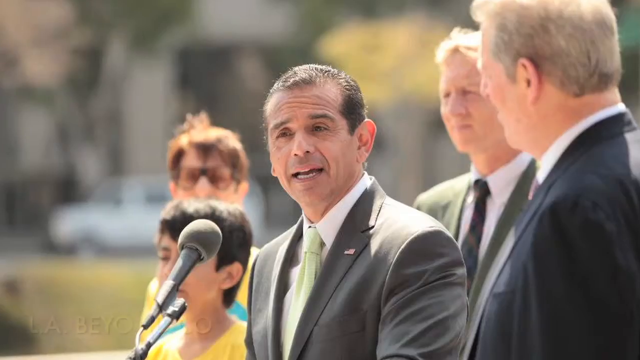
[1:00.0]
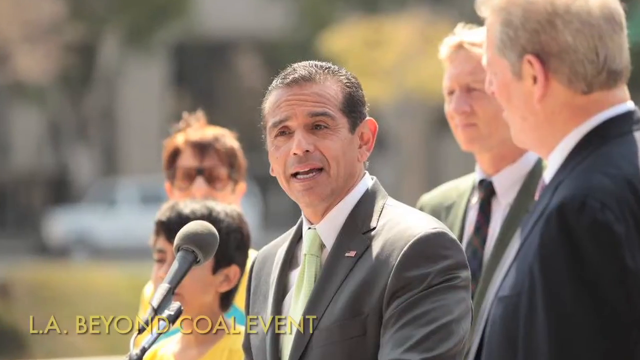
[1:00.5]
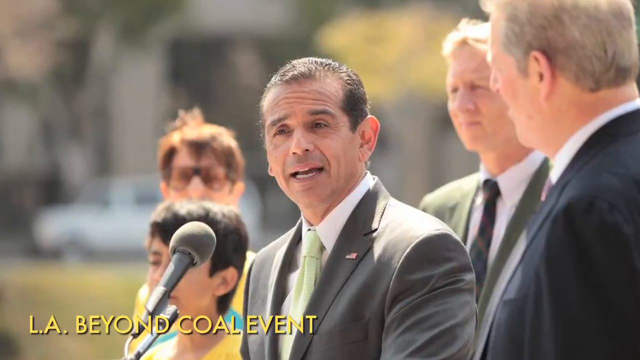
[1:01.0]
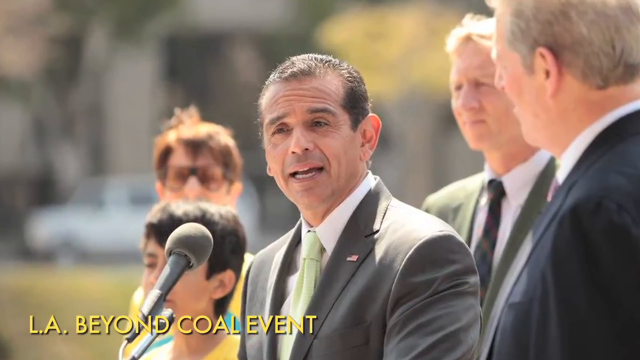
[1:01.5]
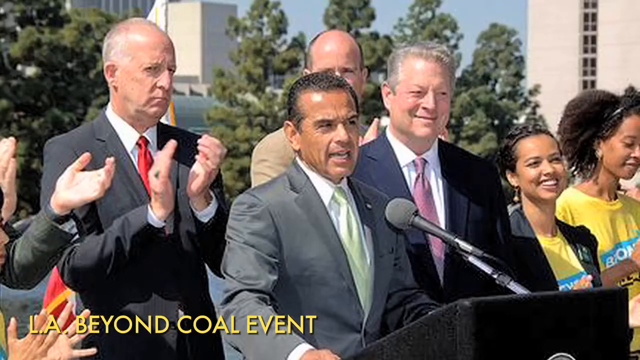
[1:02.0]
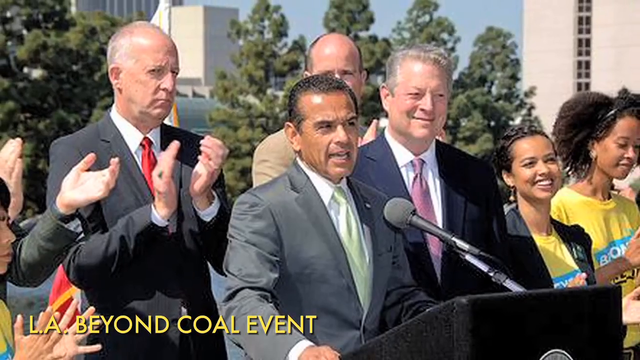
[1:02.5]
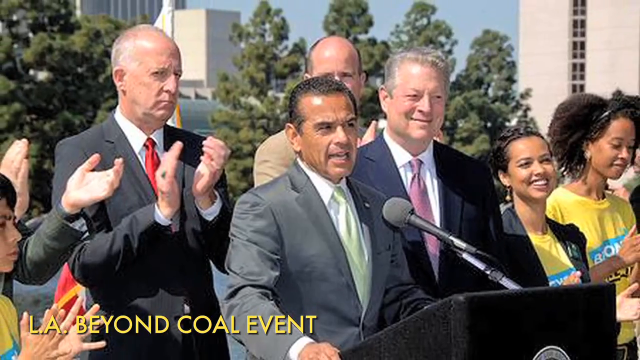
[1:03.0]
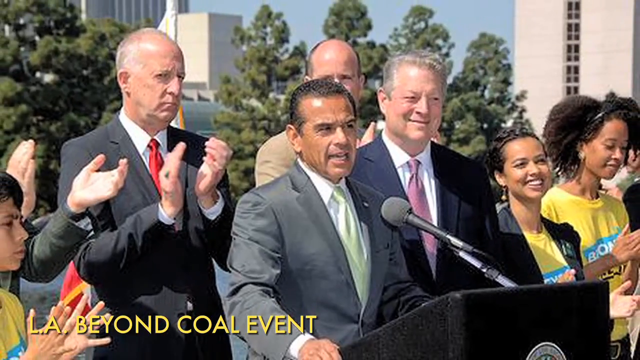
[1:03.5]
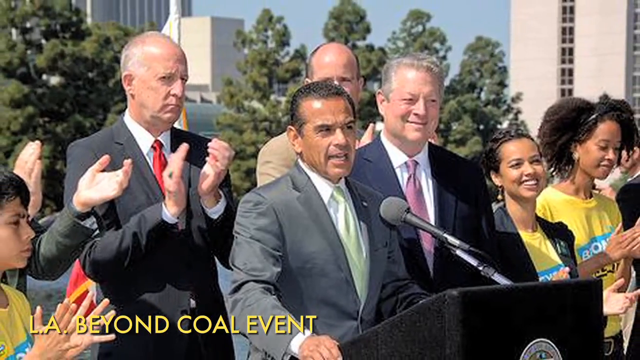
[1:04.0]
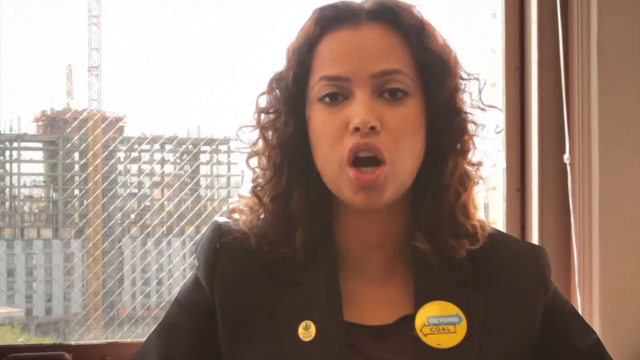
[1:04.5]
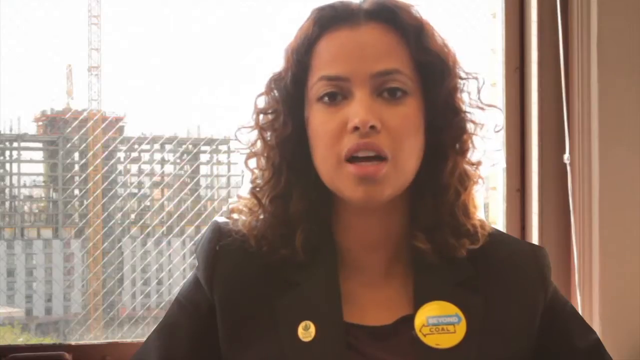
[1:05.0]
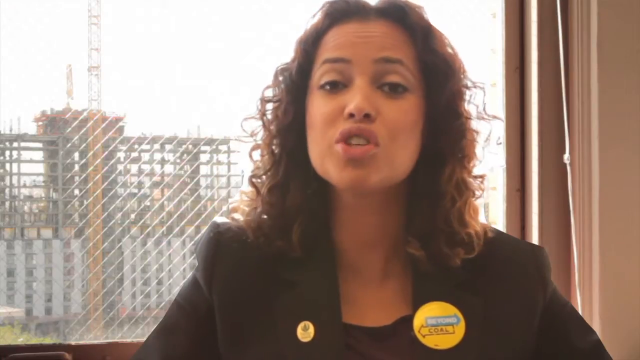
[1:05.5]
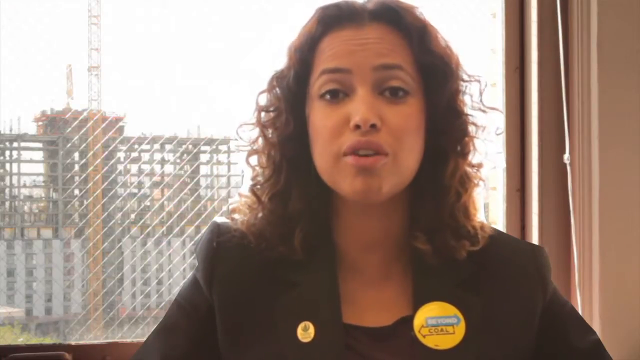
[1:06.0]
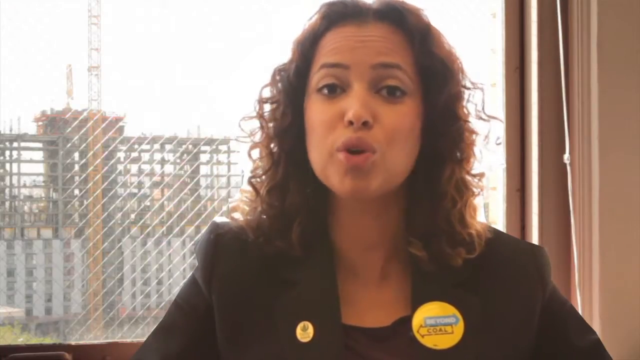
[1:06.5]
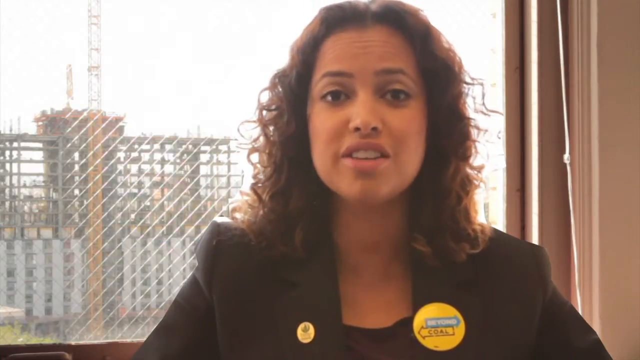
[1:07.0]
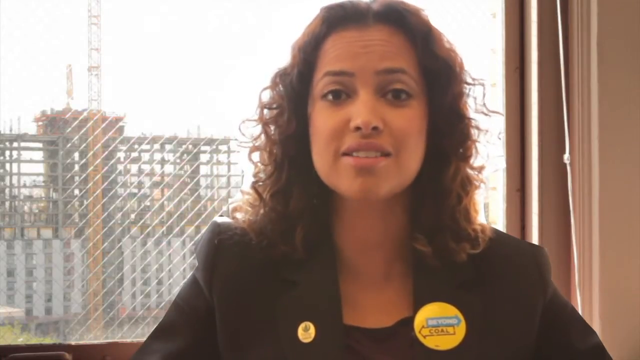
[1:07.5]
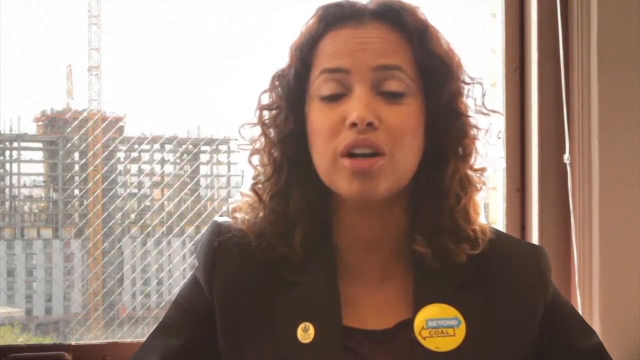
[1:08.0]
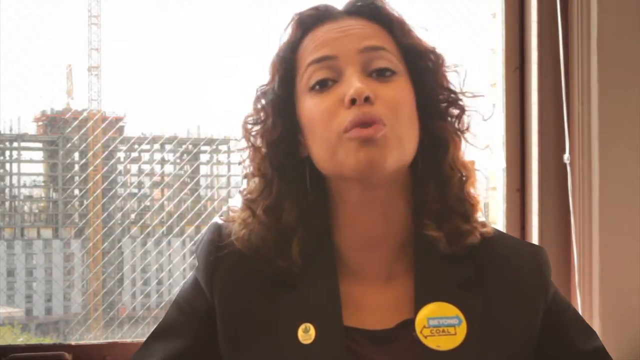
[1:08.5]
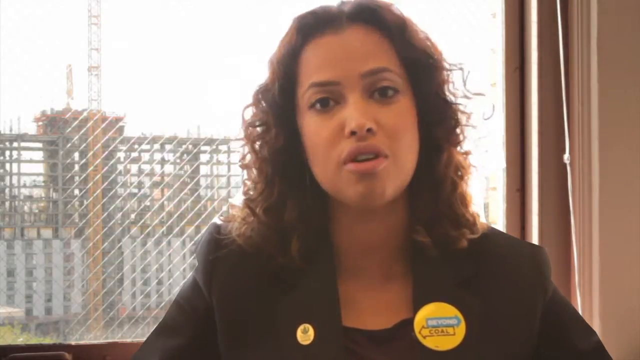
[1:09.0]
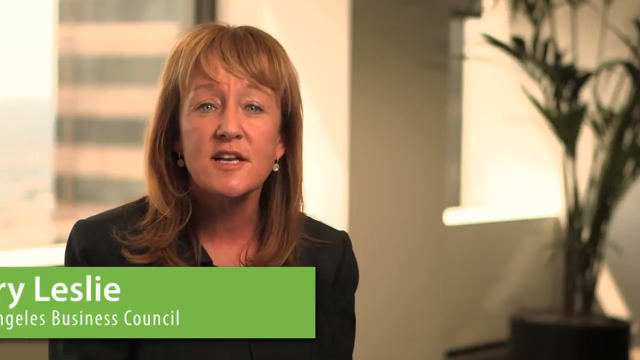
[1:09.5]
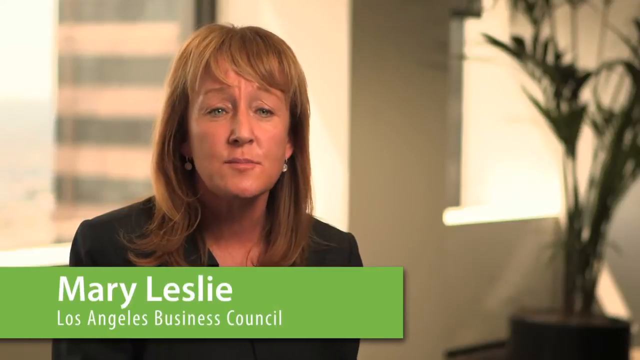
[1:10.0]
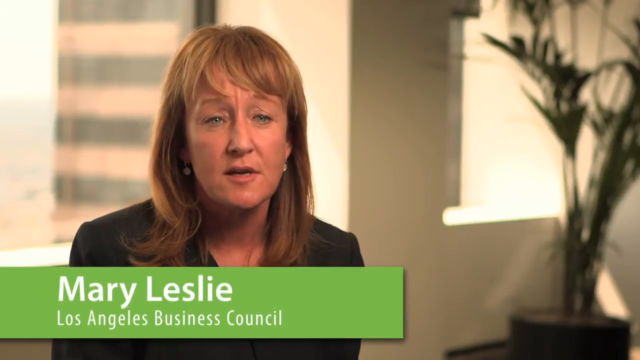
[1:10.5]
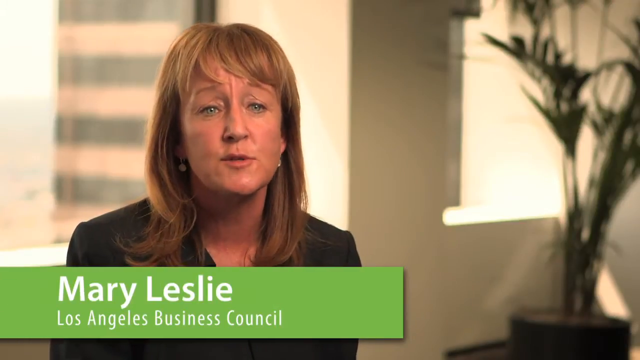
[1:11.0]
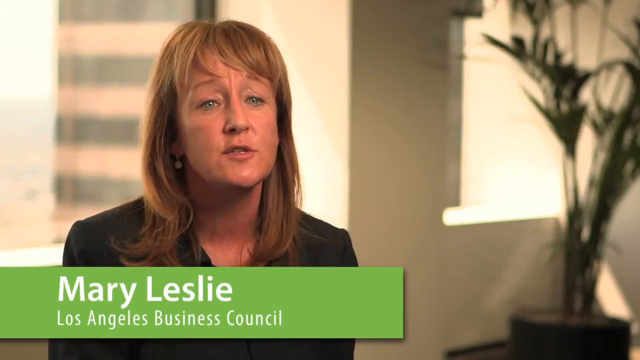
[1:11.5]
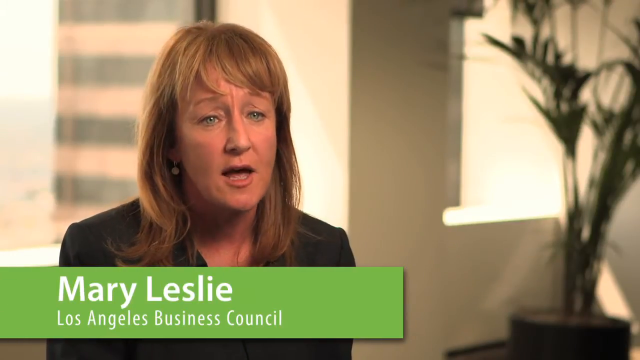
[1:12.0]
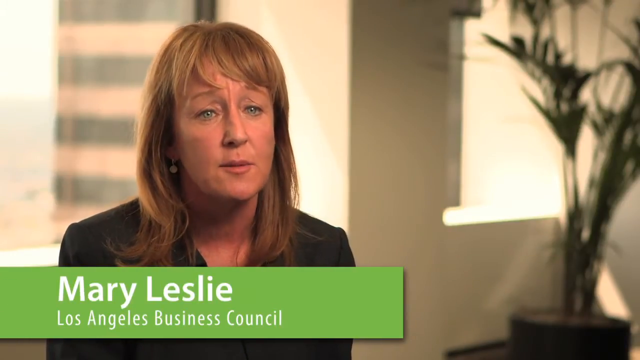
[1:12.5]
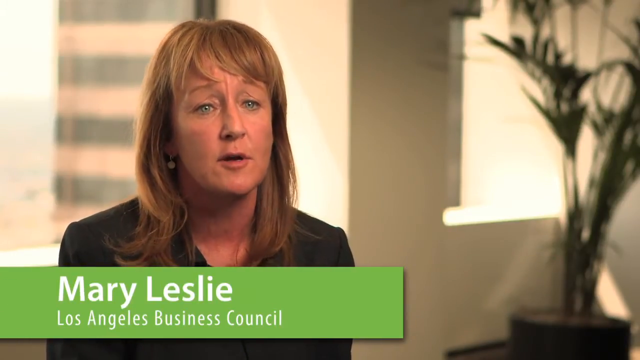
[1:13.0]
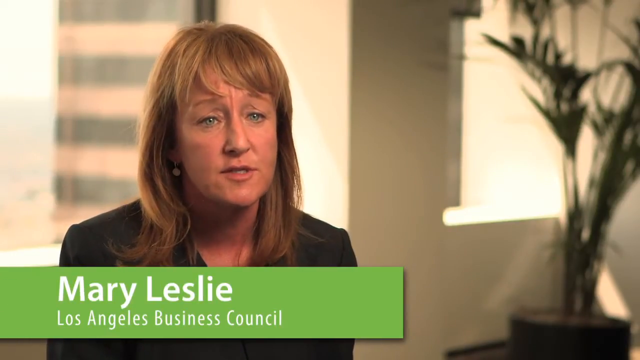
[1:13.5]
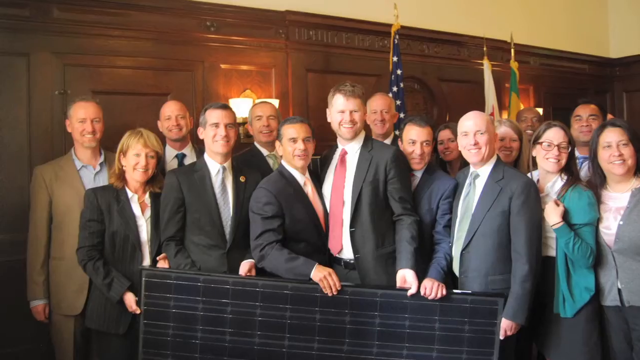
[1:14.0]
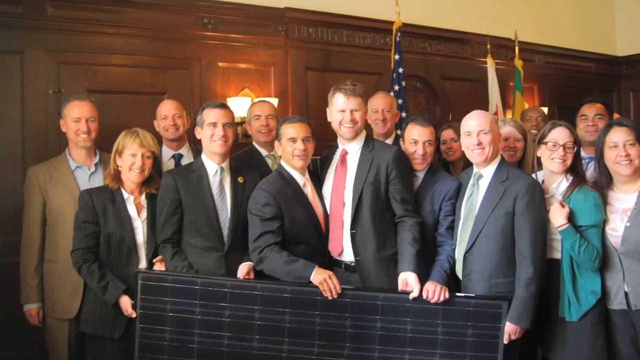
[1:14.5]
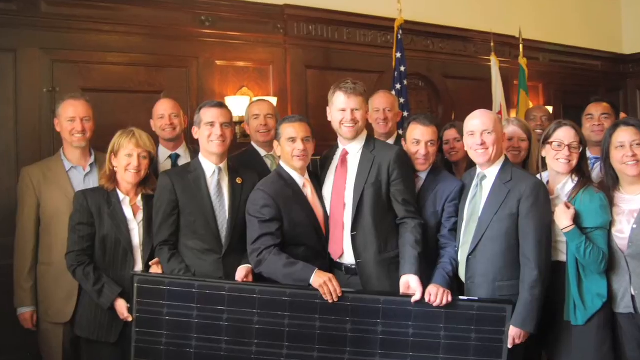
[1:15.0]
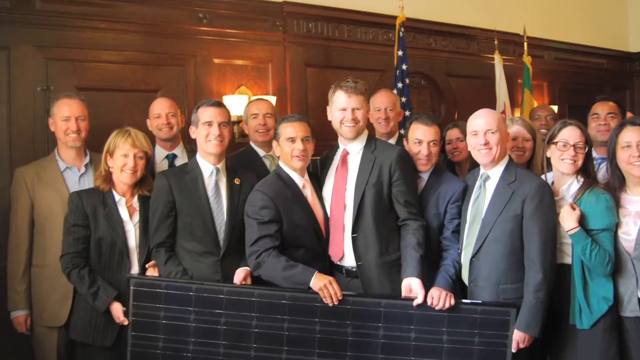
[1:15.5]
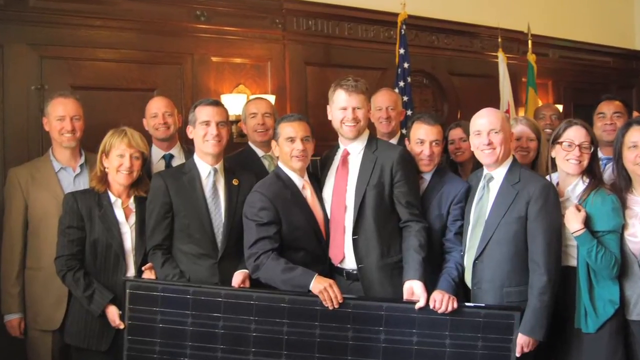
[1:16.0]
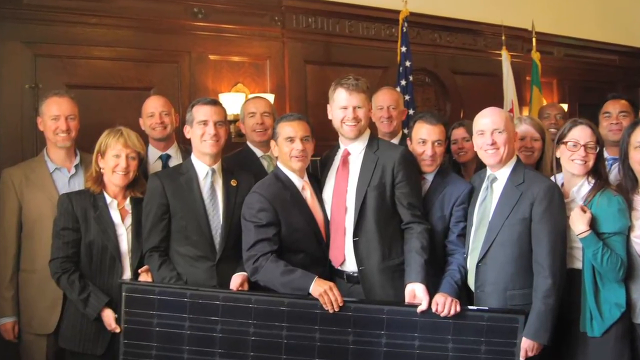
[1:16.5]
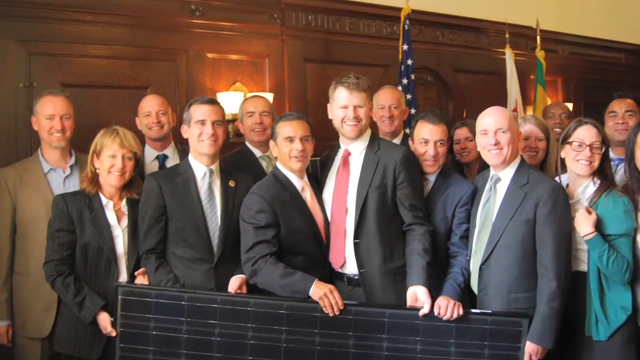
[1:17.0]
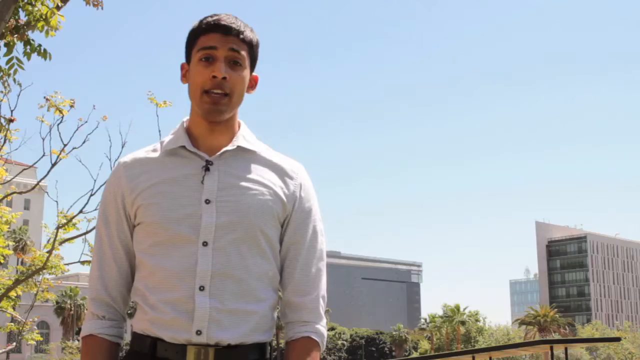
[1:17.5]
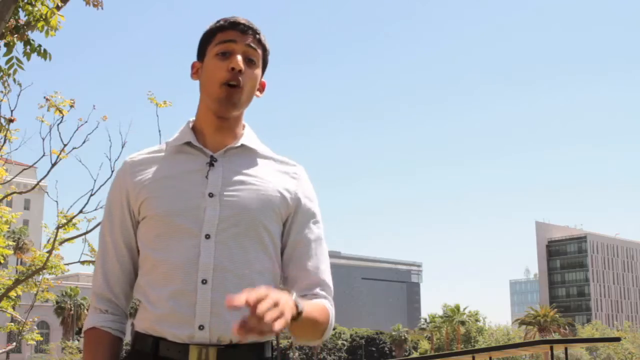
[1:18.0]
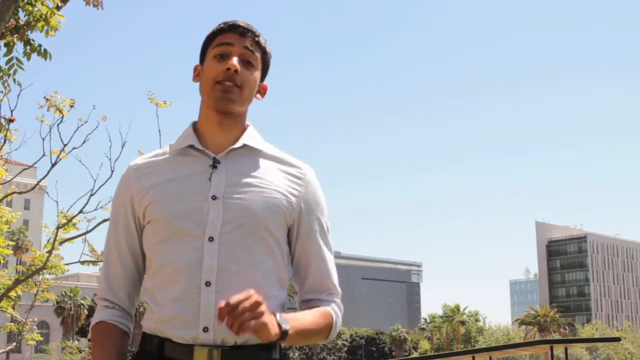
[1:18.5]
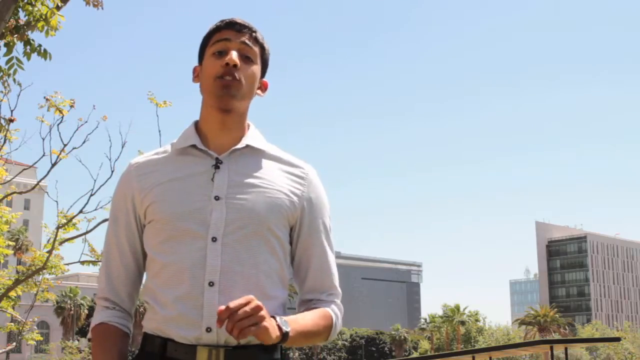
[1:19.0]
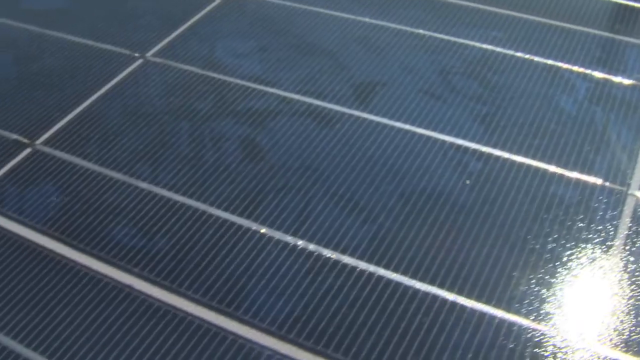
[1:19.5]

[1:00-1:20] A picture shows a man who seems to be the mayor of Los Angeles speaking into a microphone. He is standing still and wears a kind of gray suit with a green tie and an American flag pin attached to the suit. Other people are in the picture: on the mayor's right is a small child, and behind the child there seems to be a man or woman wearing sunglasses. Behind the mayor are two men, also wearing suits. The picture is static and zooms into the mayor. It switches to another picture in which the mayor is speaking again, seemingly at a podium, with more people around. Three more men are in the background. On the left-hand side is a small child, of whom only a little part of the front of the face is visible, and another person, of whom only a hand is visible, seemingly clapping along with the rest of the audience. Toward the right are two ladies wearing the same bright yellow t-shirts, which have blue on them with white text on top of the blue, probably a slogan.